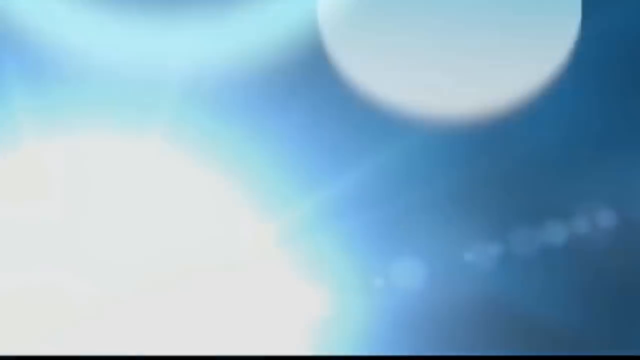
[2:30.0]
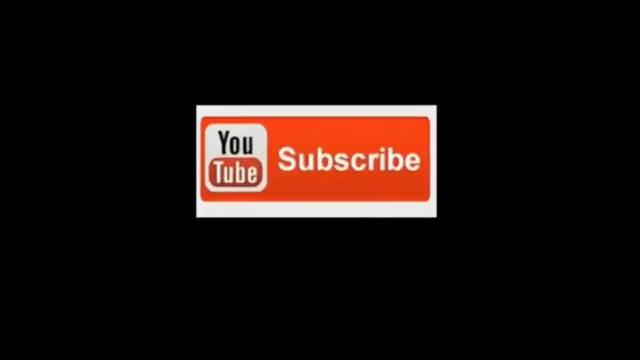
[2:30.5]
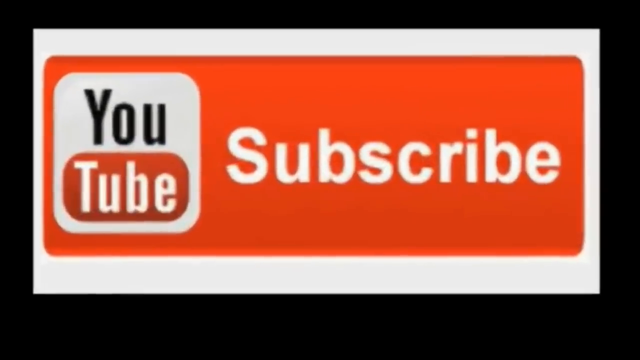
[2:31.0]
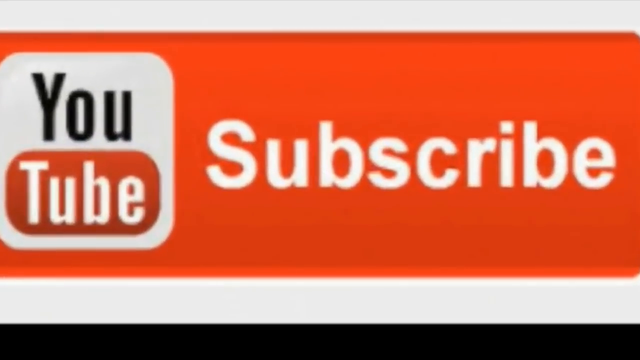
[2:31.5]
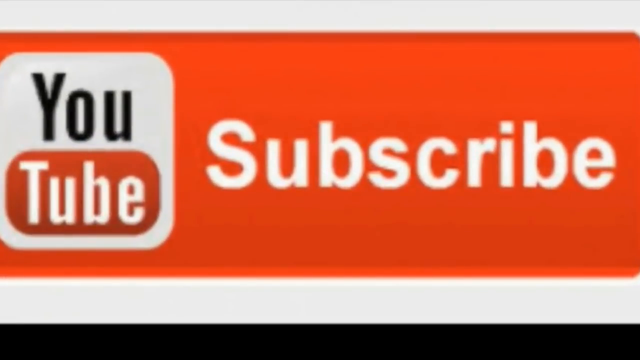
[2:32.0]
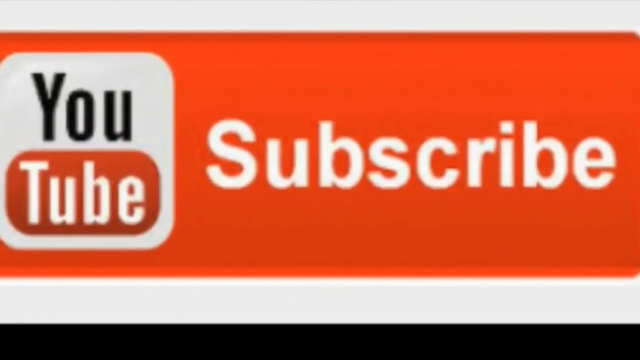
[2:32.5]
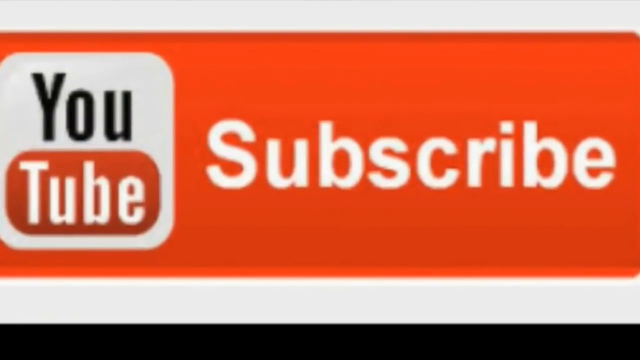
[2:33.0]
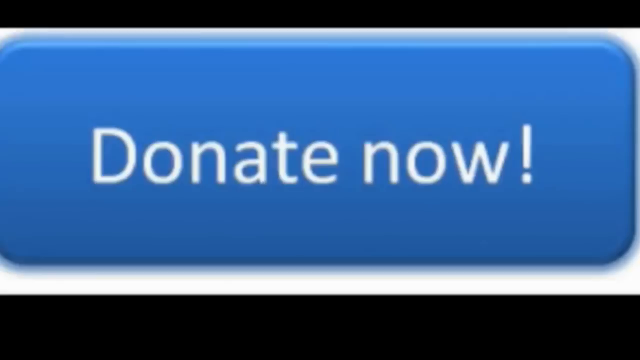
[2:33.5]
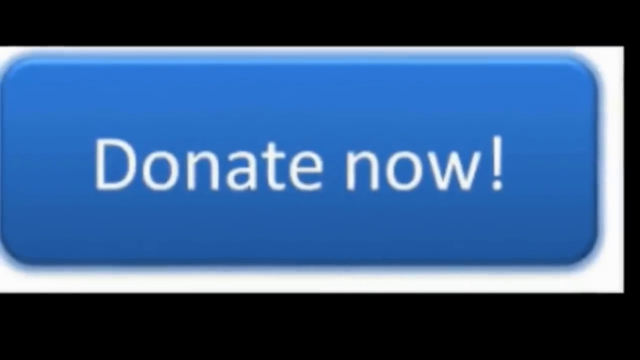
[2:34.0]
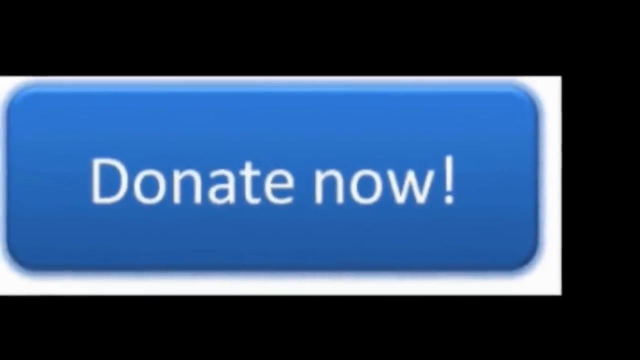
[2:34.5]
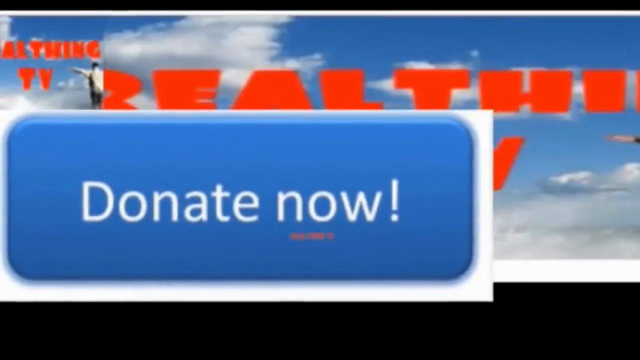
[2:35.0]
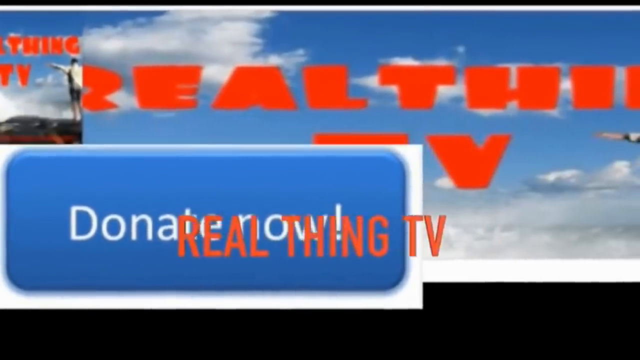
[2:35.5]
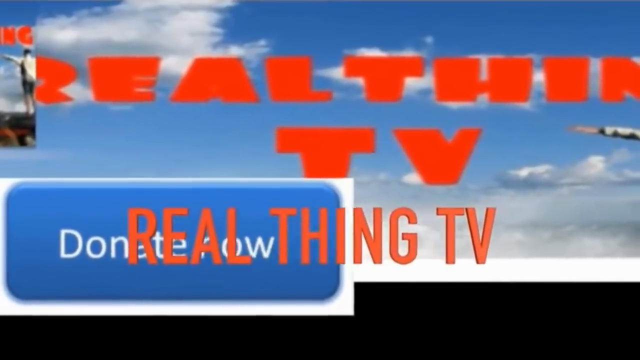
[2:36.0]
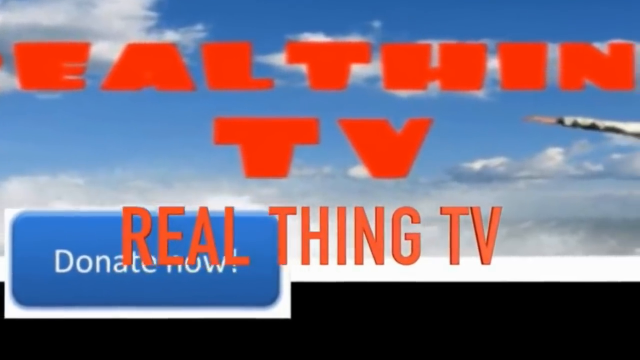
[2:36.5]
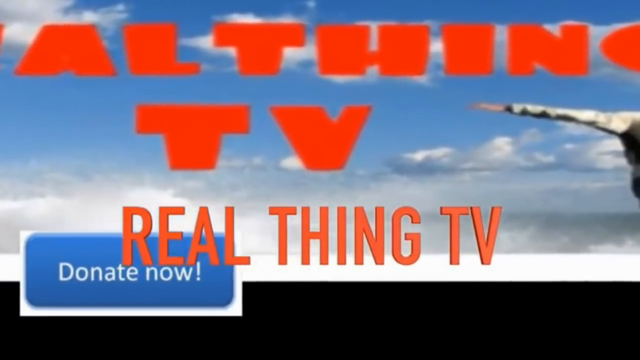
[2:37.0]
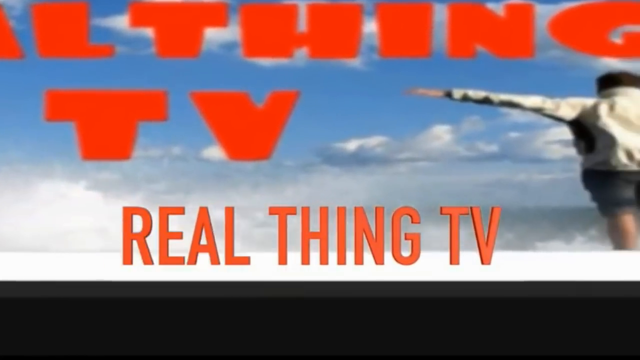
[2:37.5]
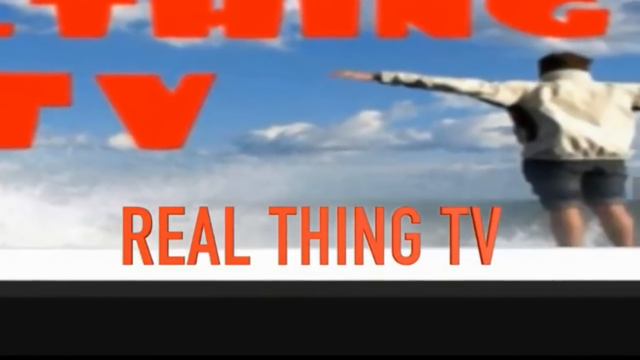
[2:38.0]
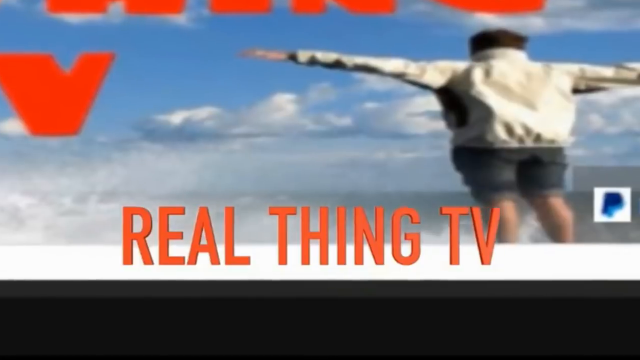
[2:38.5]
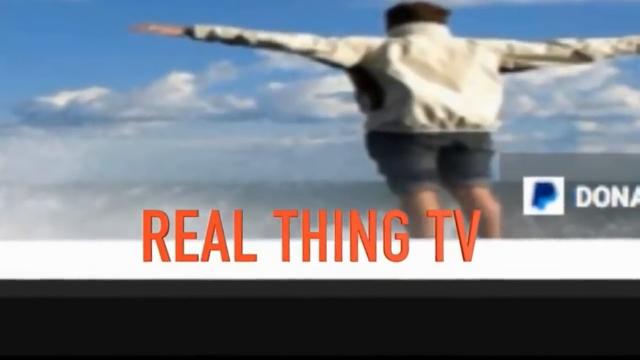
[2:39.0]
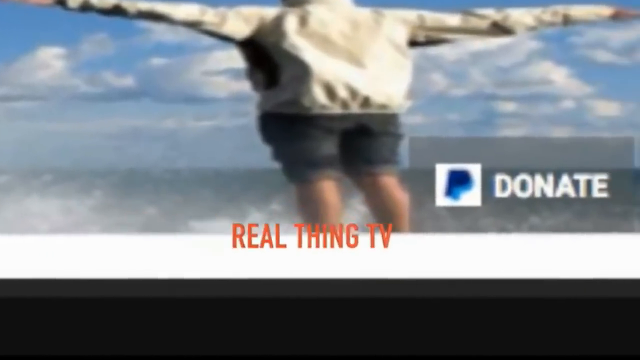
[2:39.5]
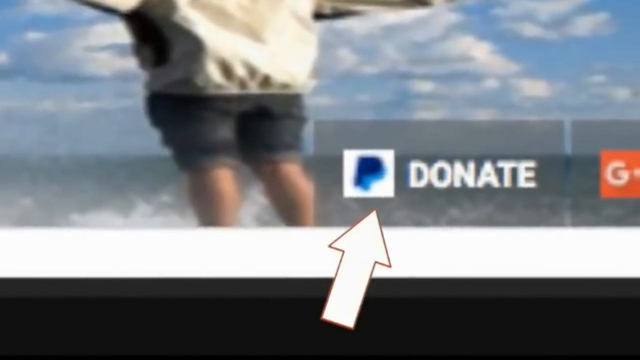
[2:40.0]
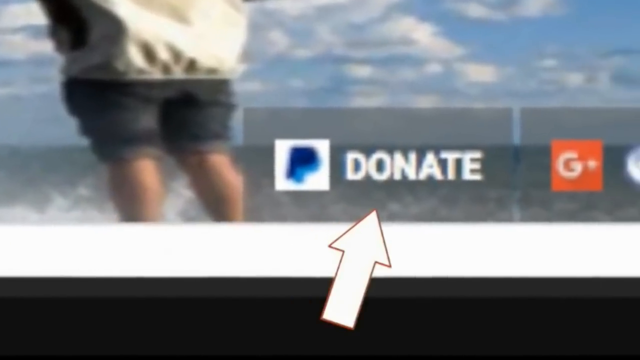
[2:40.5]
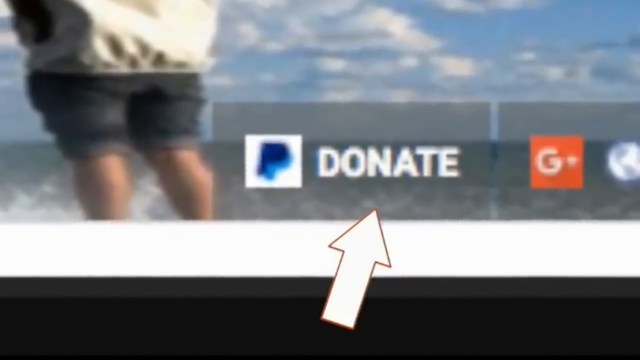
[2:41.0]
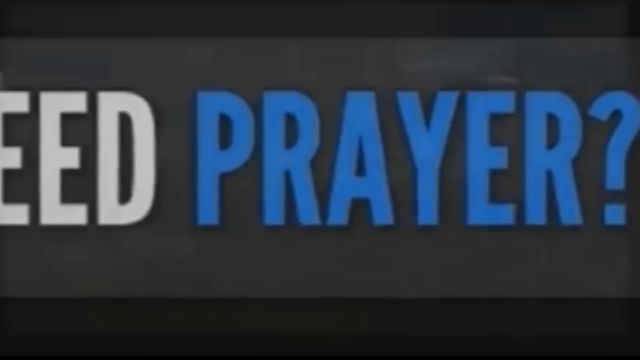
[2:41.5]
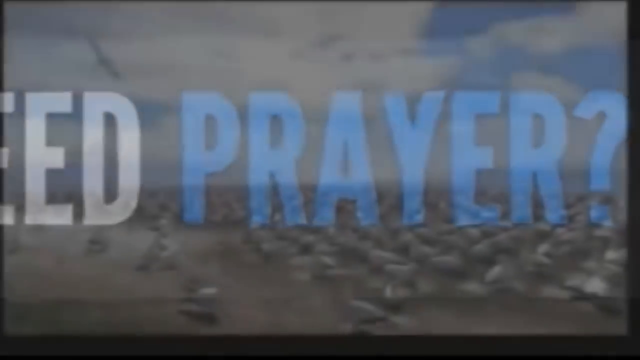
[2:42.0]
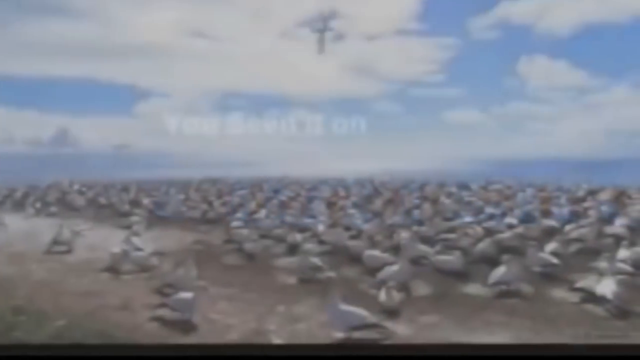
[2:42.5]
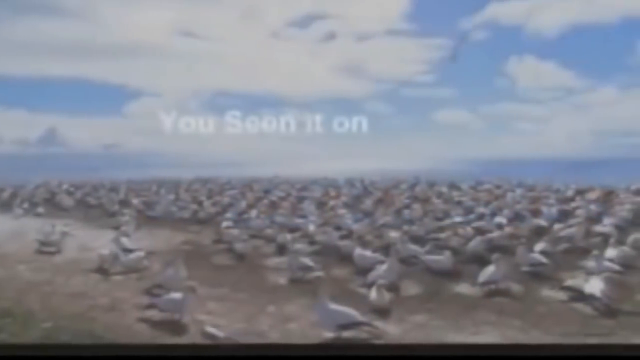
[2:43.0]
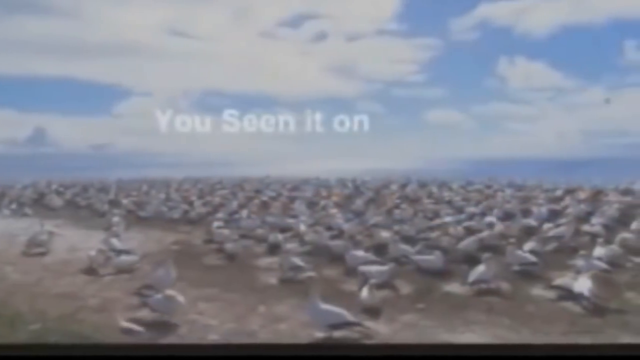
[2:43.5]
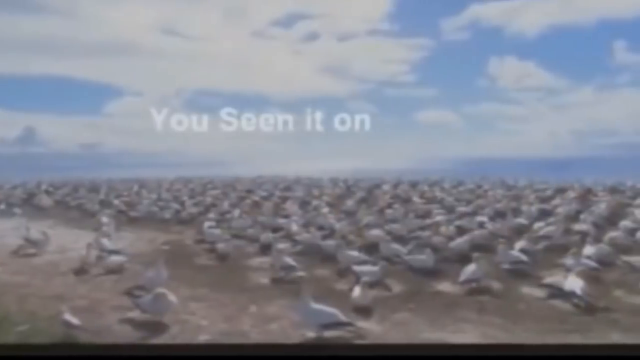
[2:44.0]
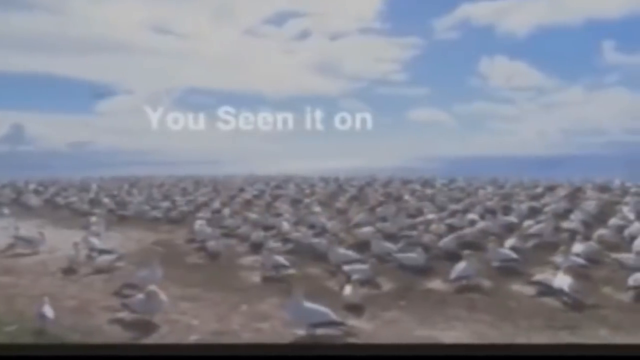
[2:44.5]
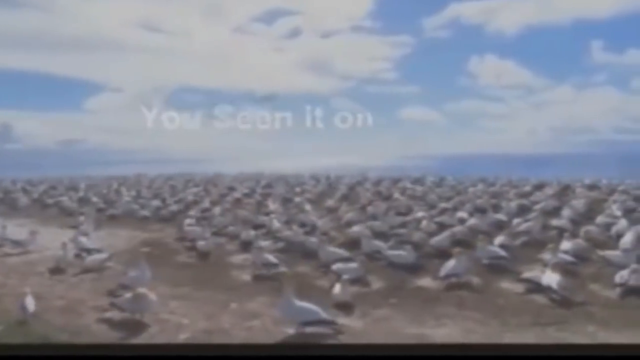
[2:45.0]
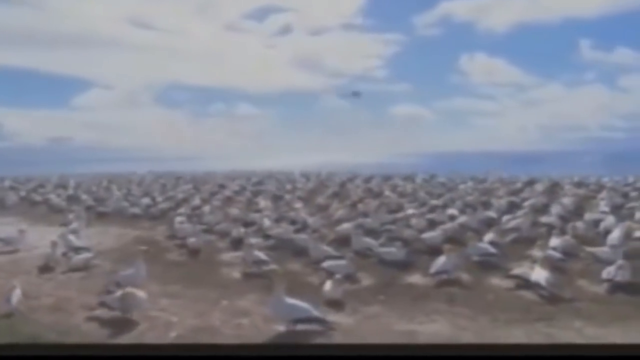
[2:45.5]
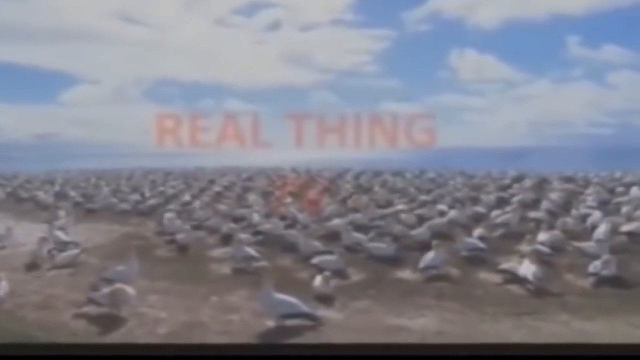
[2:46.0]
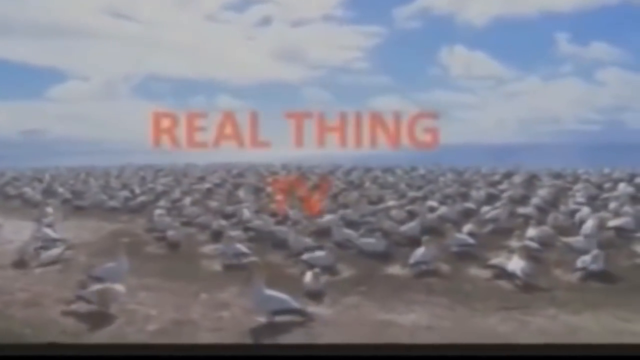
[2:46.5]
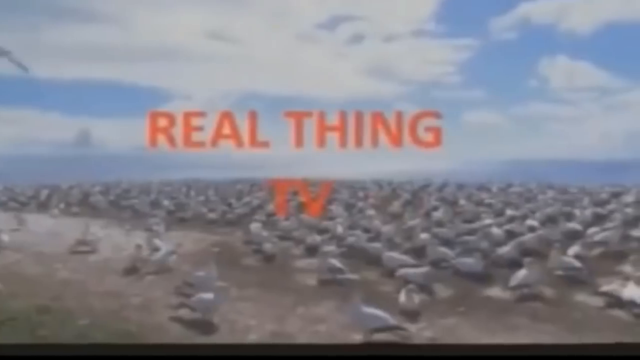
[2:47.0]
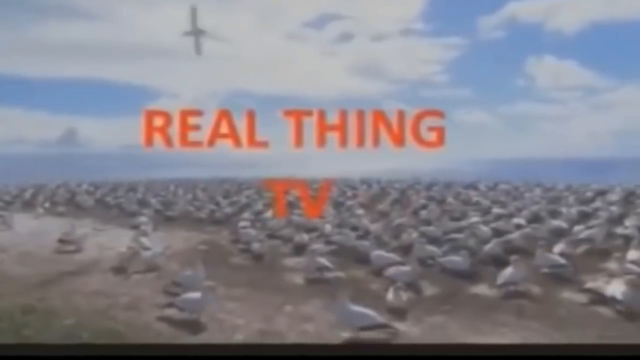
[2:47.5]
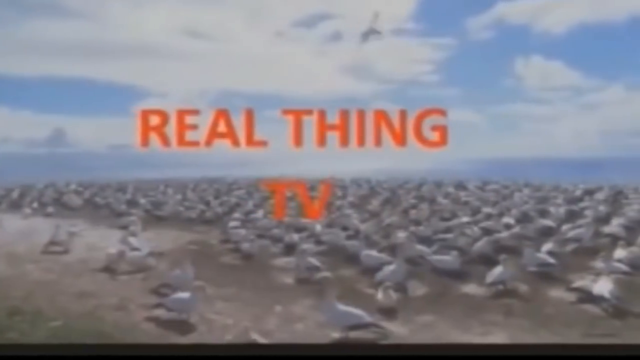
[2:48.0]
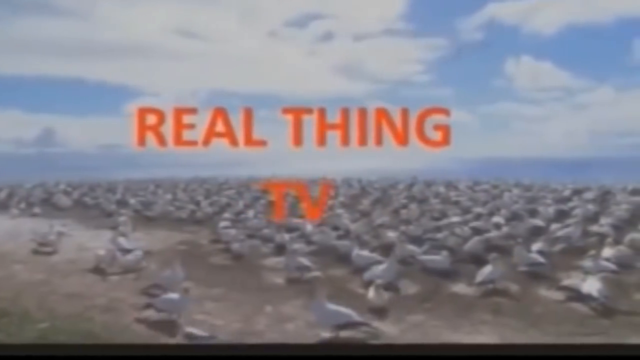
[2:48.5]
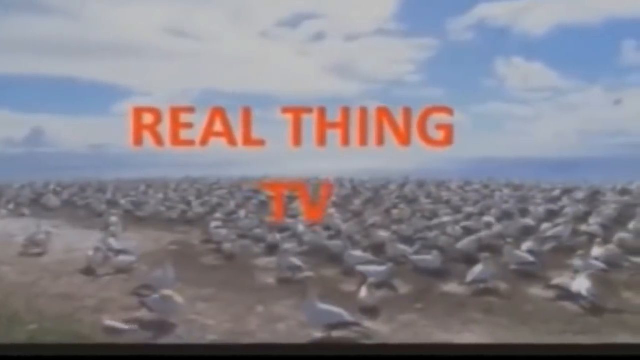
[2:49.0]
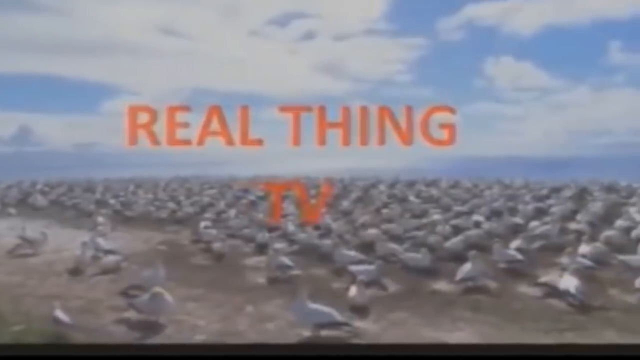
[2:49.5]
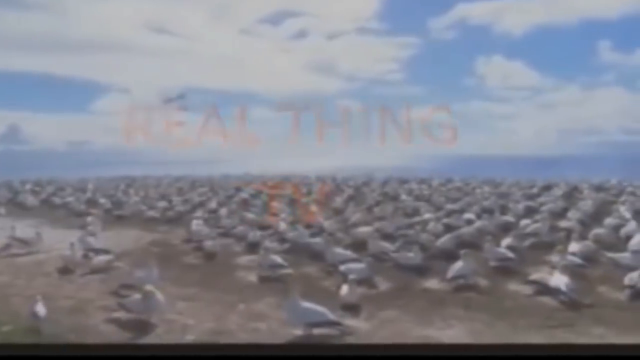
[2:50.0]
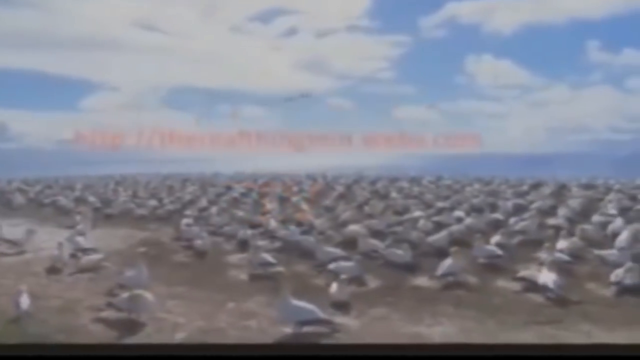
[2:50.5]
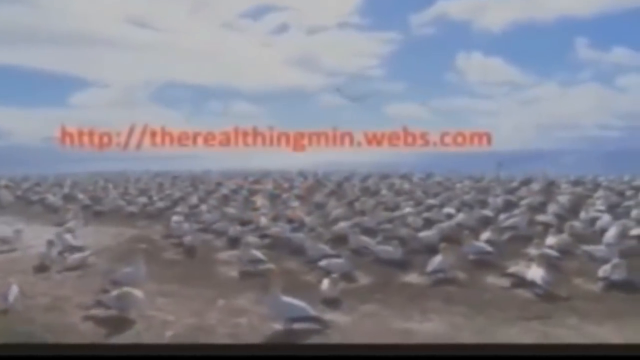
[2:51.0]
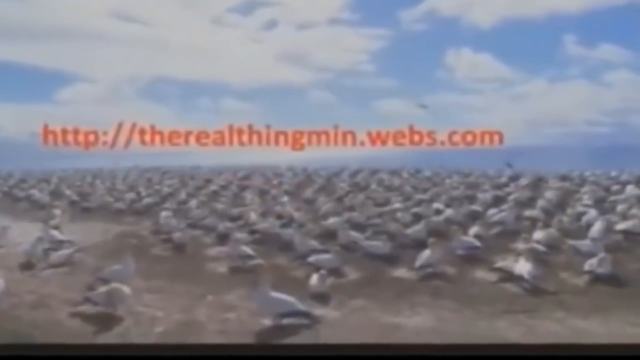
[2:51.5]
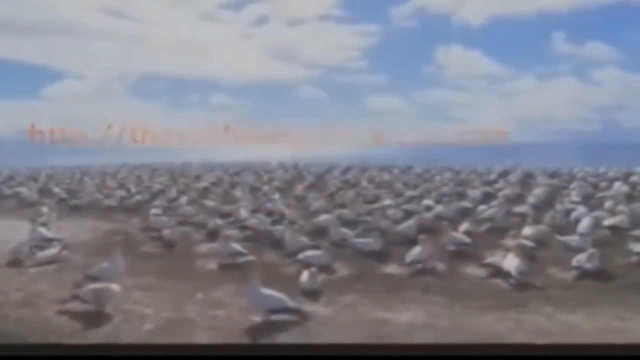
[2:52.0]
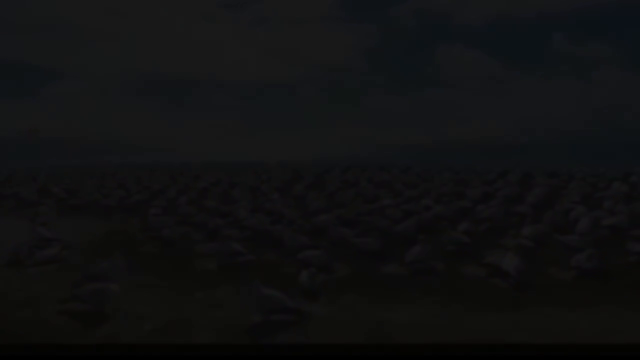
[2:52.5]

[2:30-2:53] The video flips between different screens. First there is what looks kind of like a very blue sky with bubbles, then the text "subscribe youtube" appears, followed by "donate now" in a little blue box with white writing. The name "real thing tv" is written in orange. A sky appears with a graphic of a man who seems to be overlooking an area, his arms spread out wide, wearing shorts. A white arrow pops up that says "donate" alongside a PayPal-type button. The words "need prayer" appear across the screen, with "need" in white and "prayer" in blue. What look like birds fly, and the text "you've seen it on real things tv" appears; the birds also kind of look like a field of white birds. "Real thing" comes in and out, and then a website is shown.